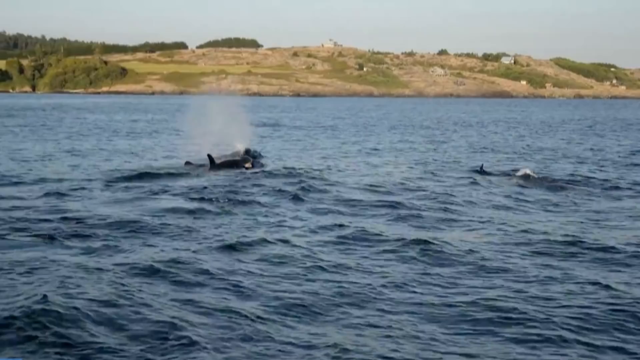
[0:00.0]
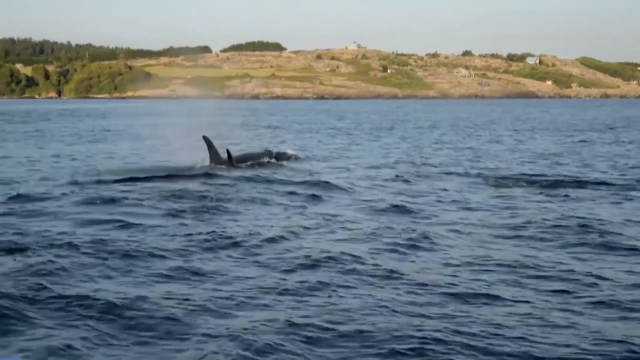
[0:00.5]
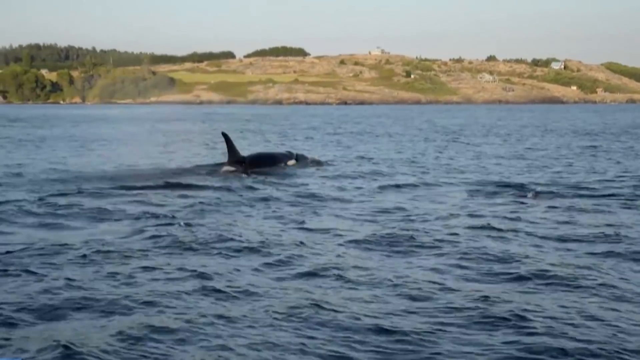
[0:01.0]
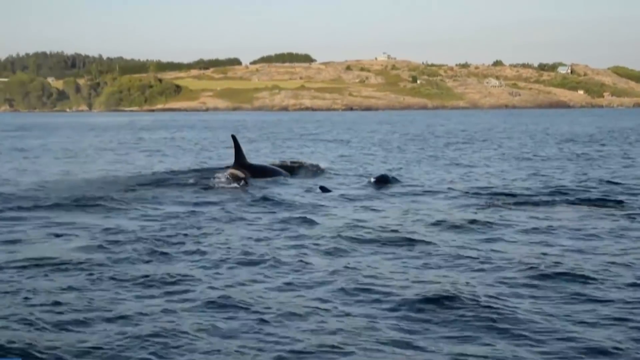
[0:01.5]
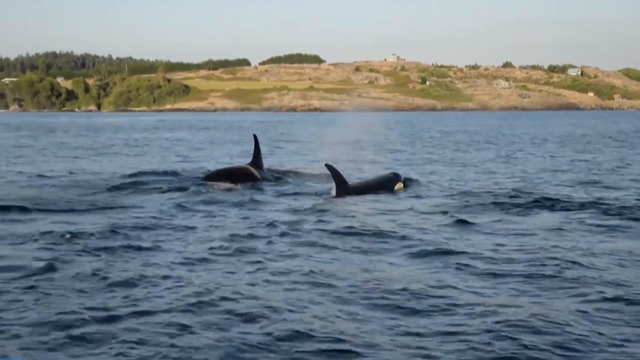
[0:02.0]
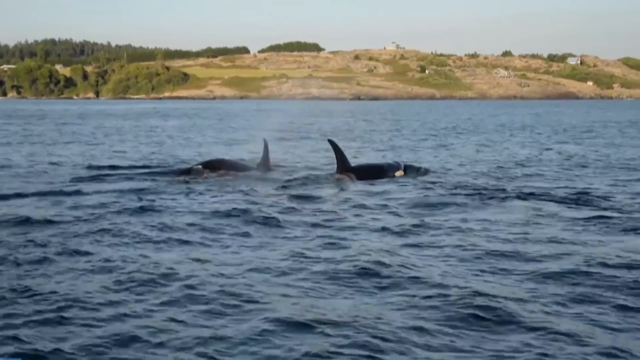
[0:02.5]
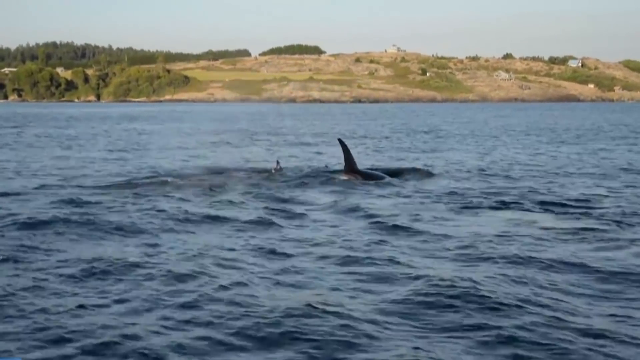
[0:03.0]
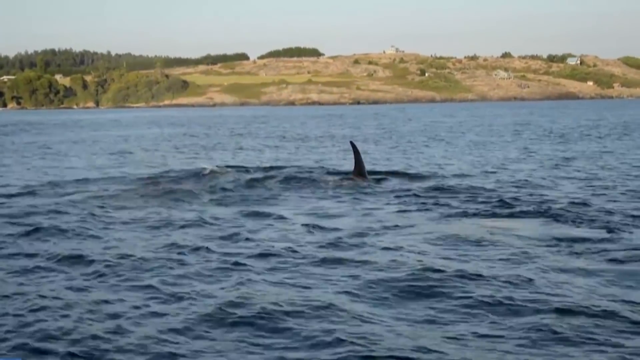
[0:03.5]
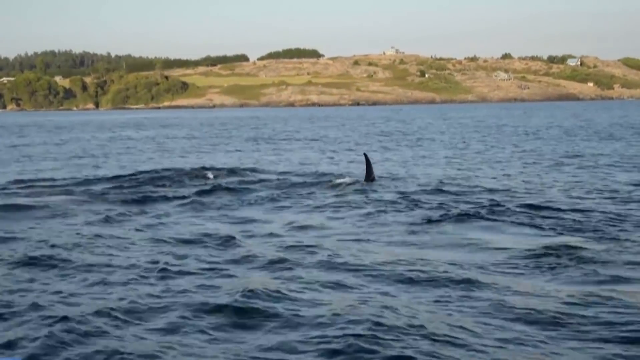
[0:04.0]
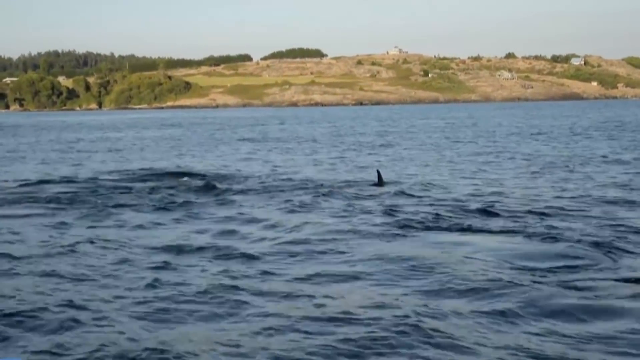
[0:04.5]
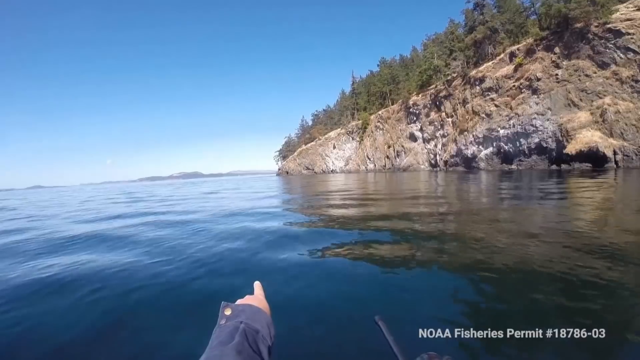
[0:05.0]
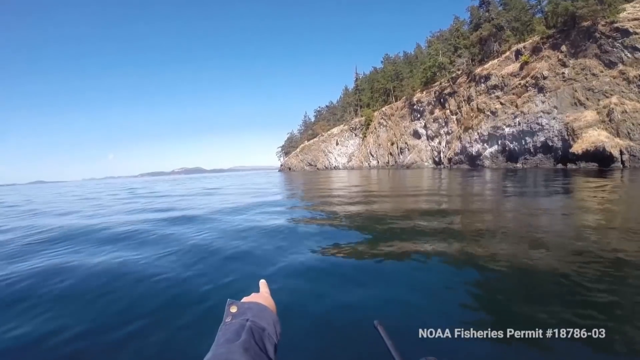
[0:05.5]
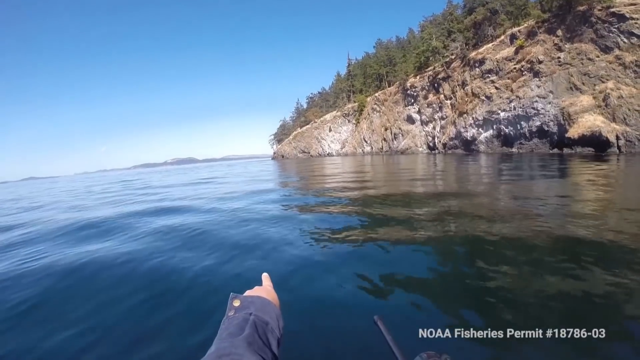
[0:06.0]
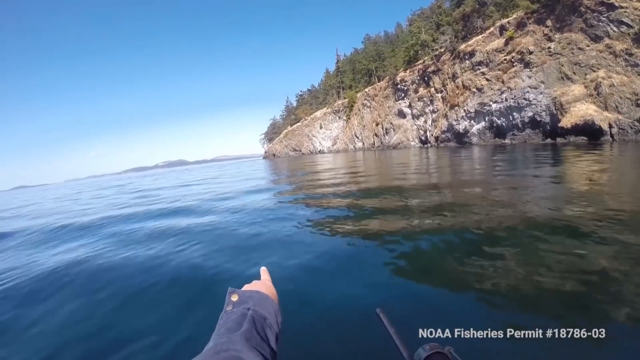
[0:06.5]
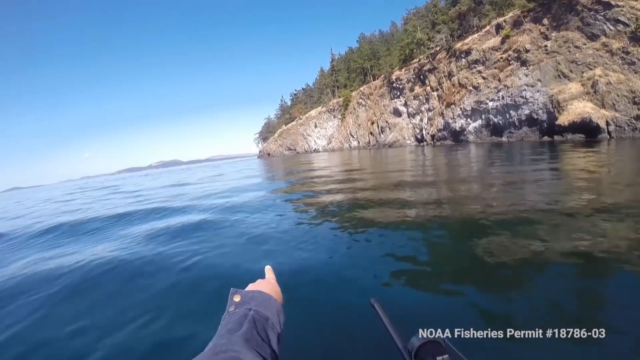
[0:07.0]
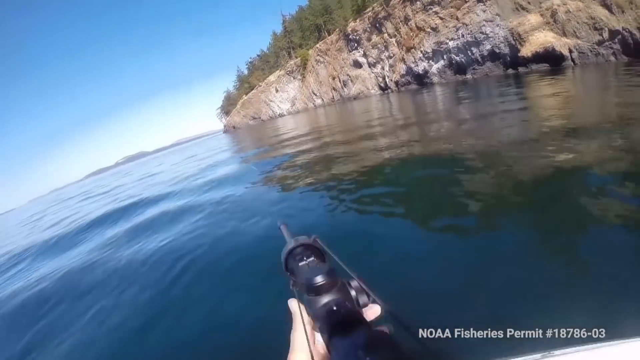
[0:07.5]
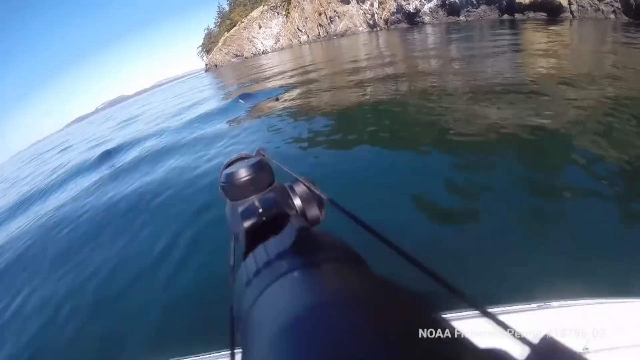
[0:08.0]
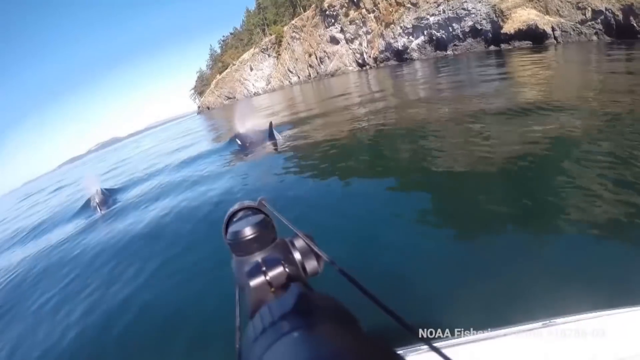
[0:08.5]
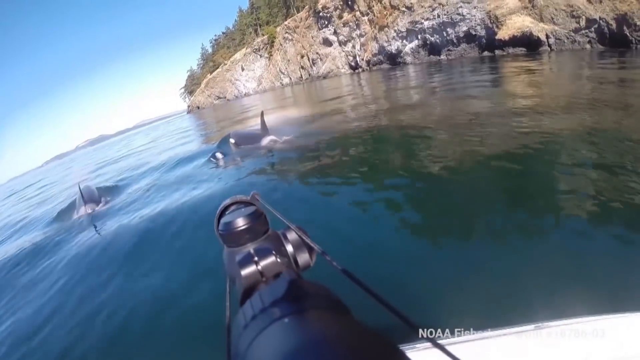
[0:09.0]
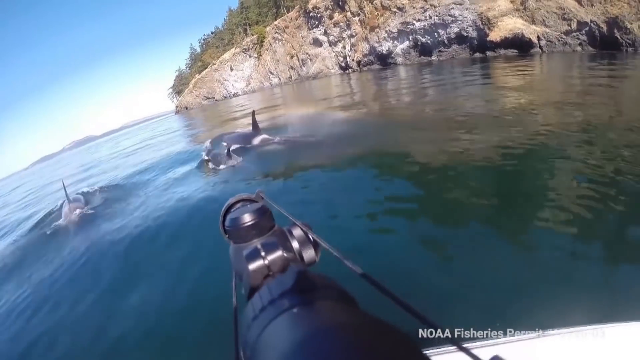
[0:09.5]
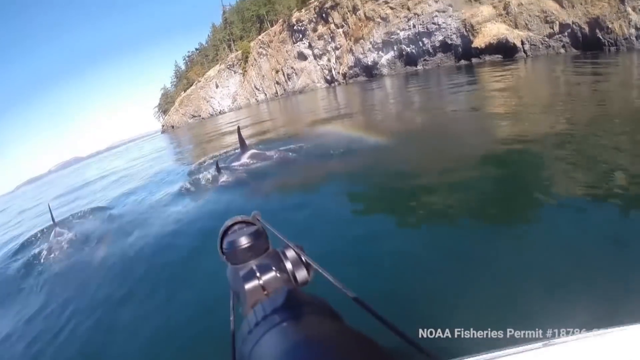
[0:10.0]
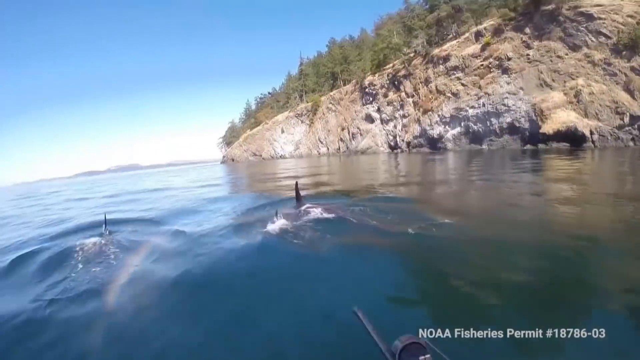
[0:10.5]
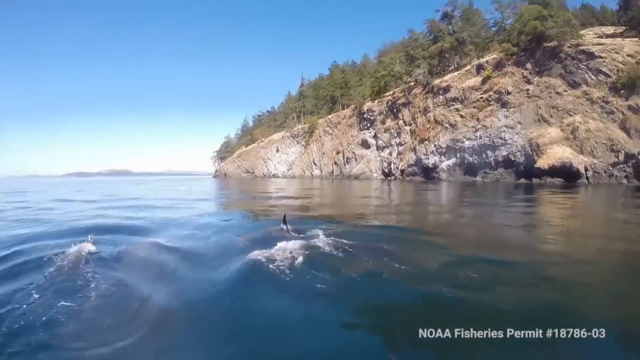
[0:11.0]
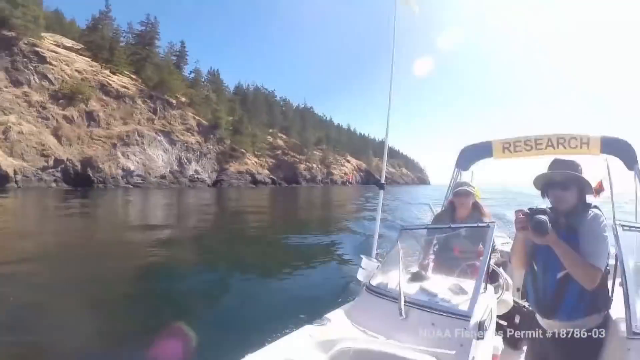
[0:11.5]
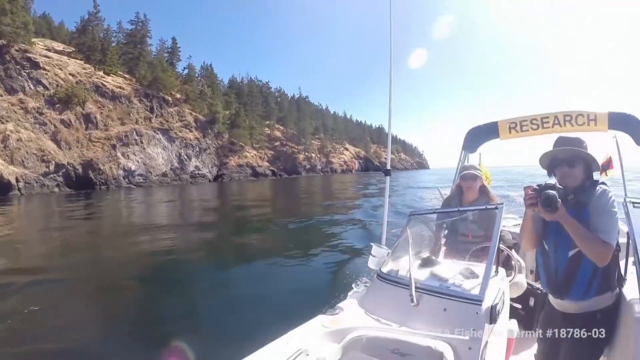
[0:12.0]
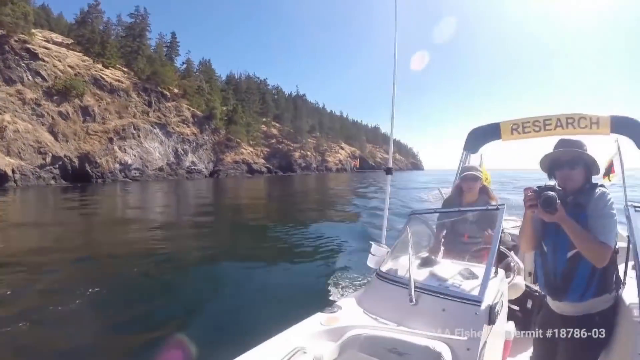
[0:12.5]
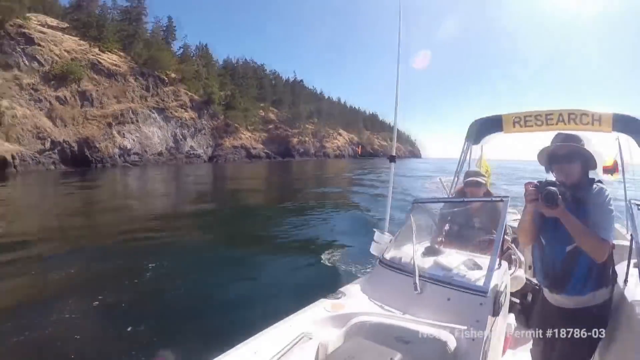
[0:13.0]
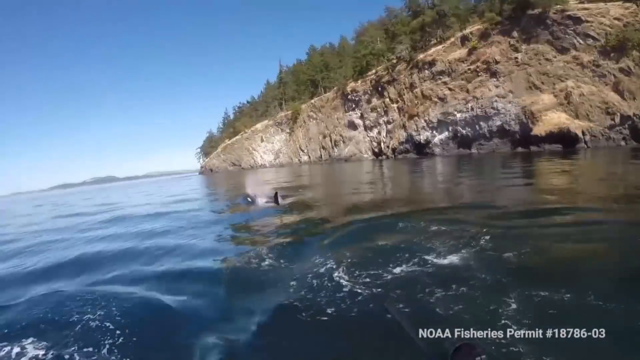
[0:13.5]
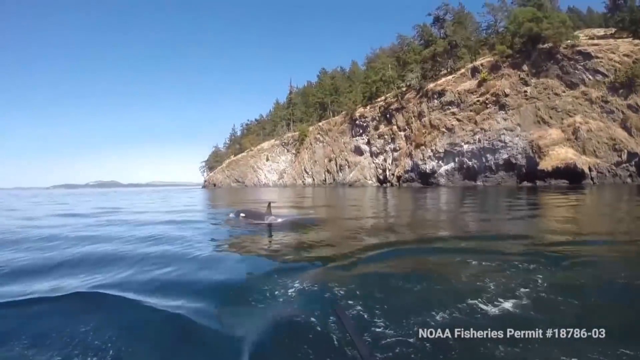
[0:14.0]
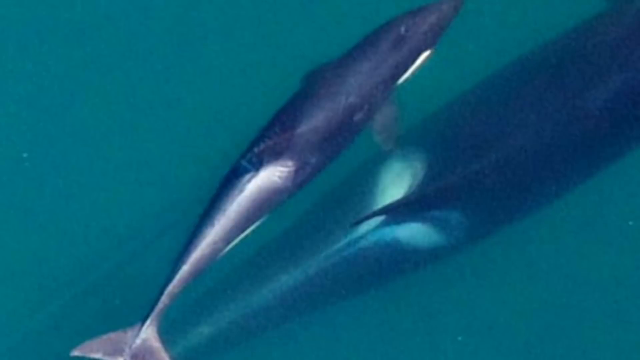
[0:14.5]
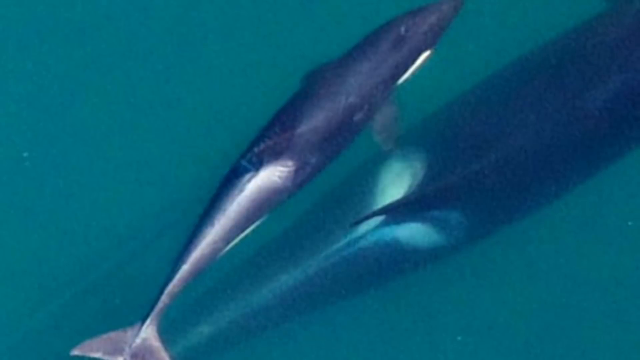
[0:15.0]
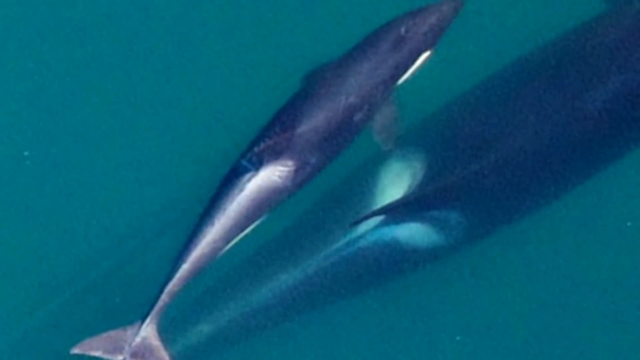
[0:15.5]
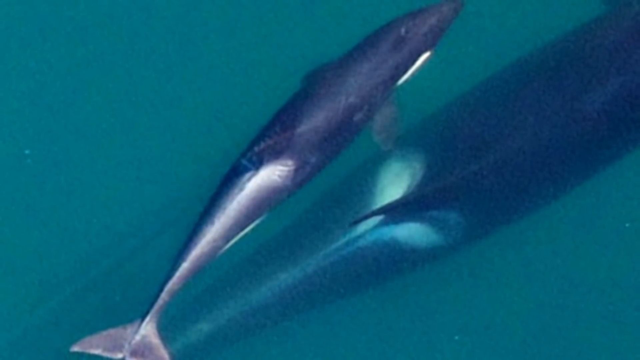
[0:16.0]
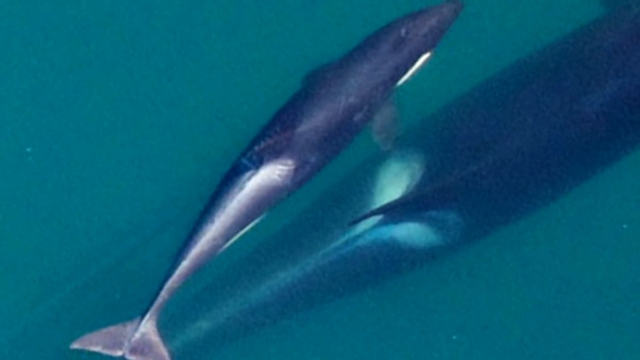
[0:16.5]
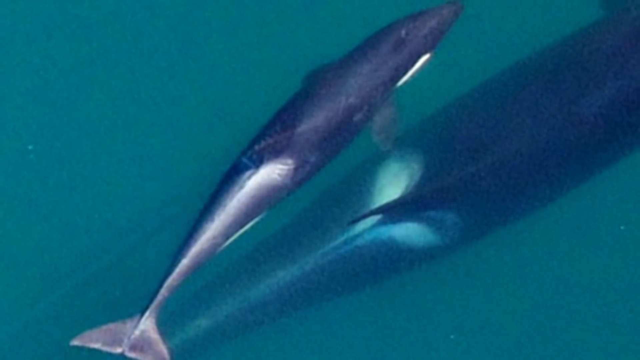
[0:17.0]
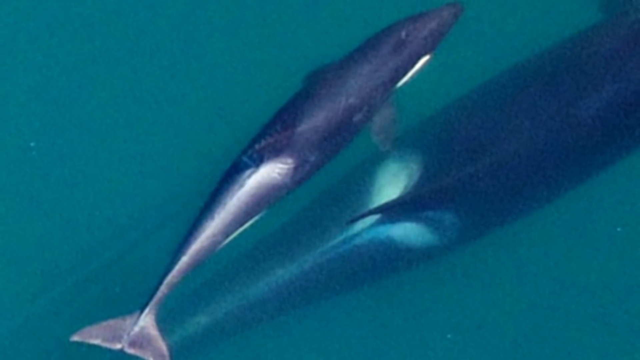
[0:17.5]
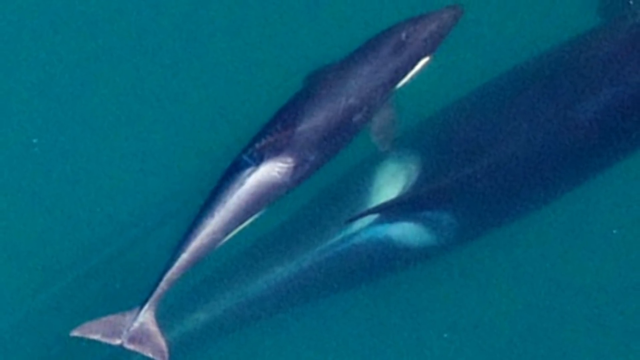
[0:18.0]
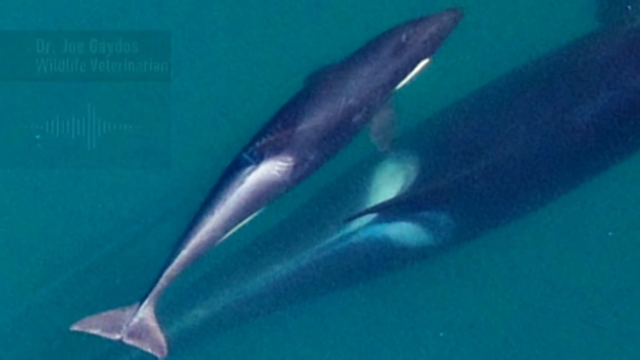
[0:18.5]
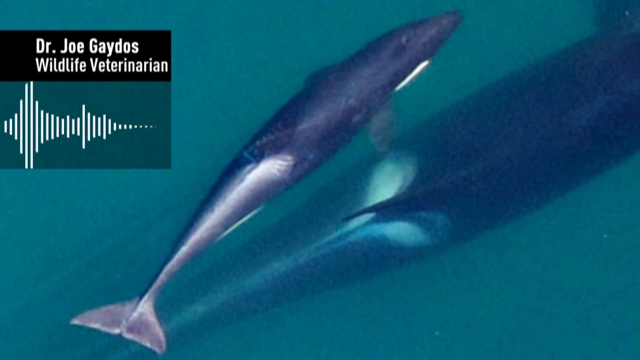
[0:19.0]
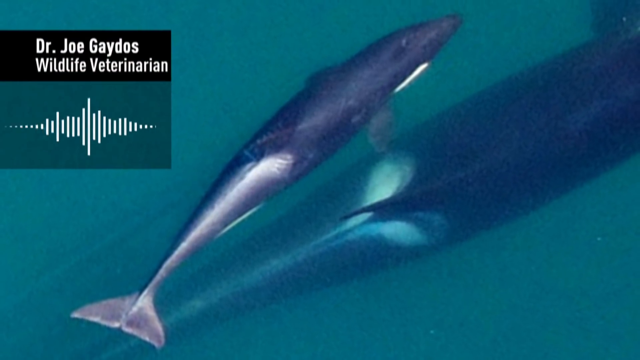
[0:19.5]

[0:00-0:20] Dolphins swim in the same direction as a boat behind them. Men and women on the boat are taking videos while the dolphins swim across the water; there appear to be three dolphins. The water is very clean, and it is unclear whether this is a sea or some other body of water. A woman, apparently, is taking a video with a camera while standing on top of the boat.